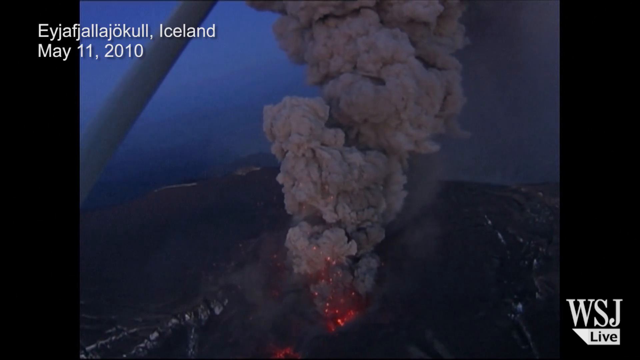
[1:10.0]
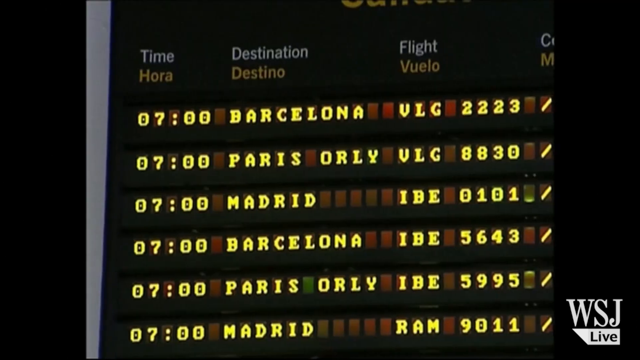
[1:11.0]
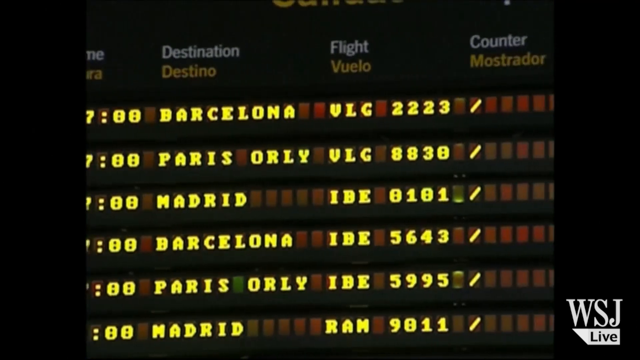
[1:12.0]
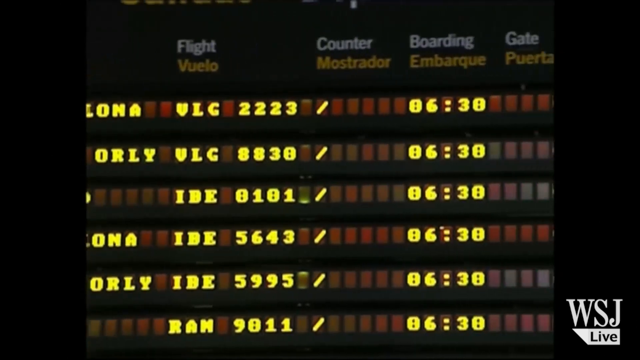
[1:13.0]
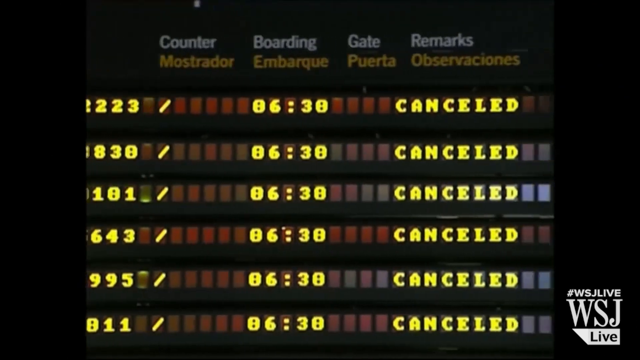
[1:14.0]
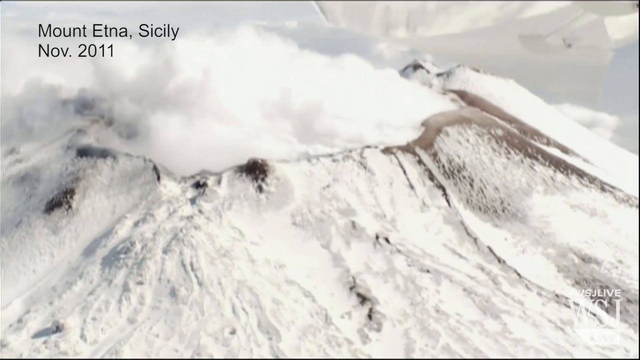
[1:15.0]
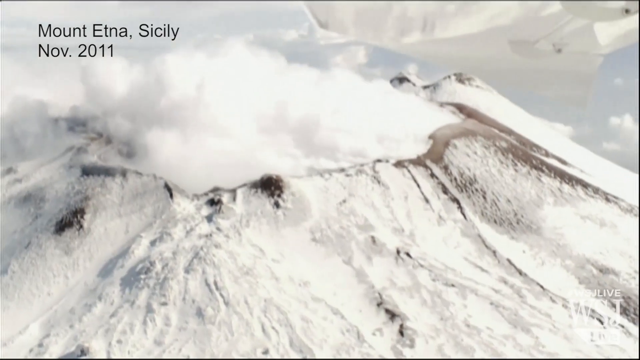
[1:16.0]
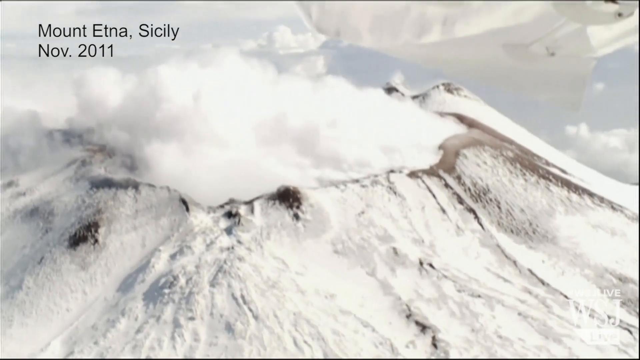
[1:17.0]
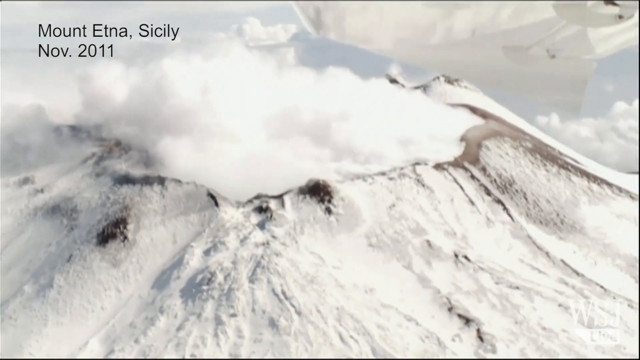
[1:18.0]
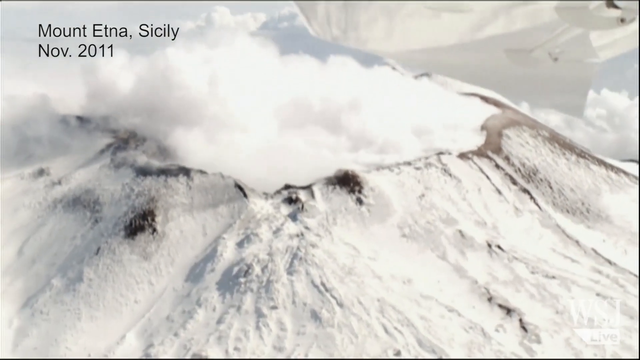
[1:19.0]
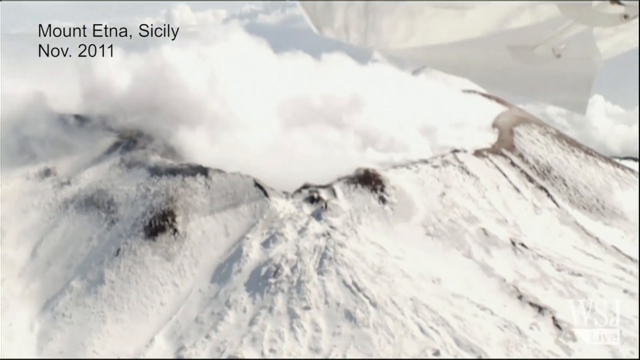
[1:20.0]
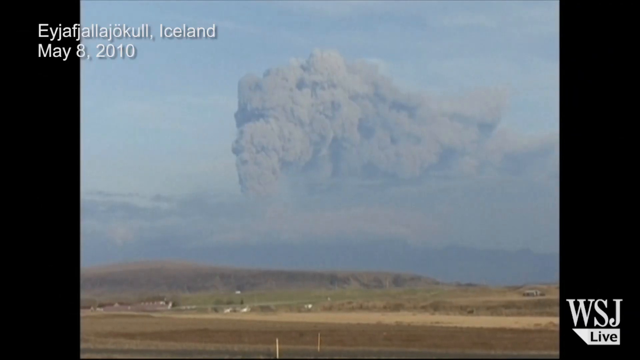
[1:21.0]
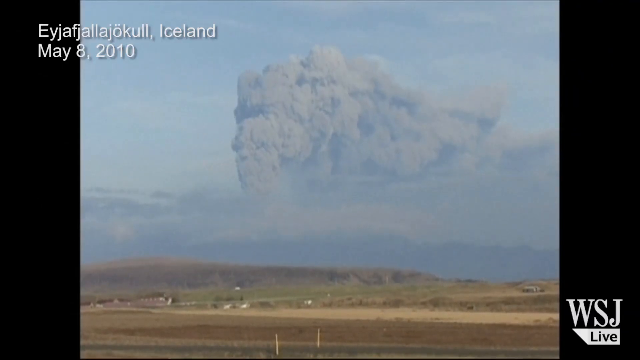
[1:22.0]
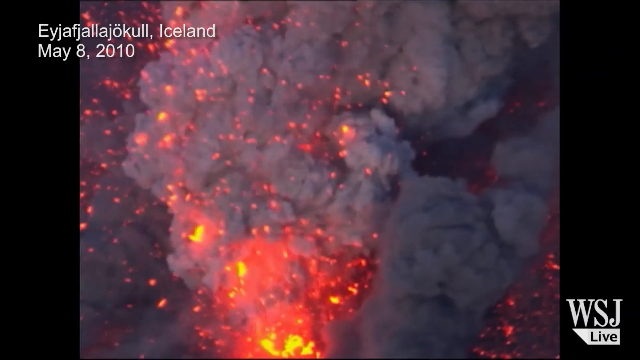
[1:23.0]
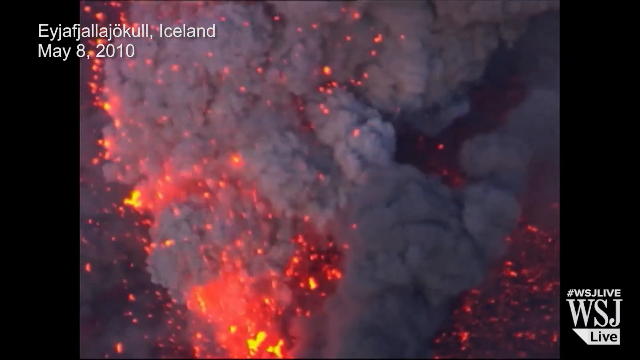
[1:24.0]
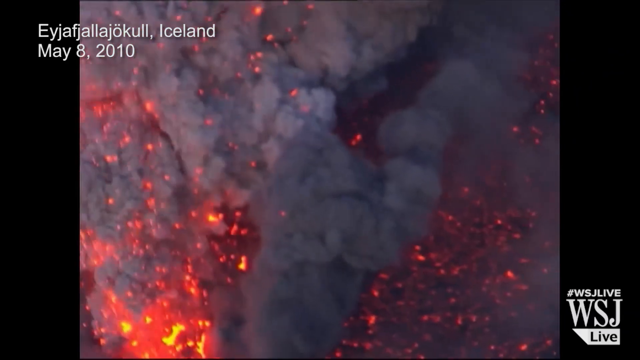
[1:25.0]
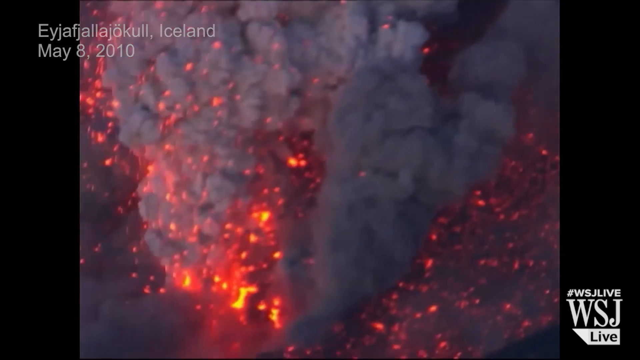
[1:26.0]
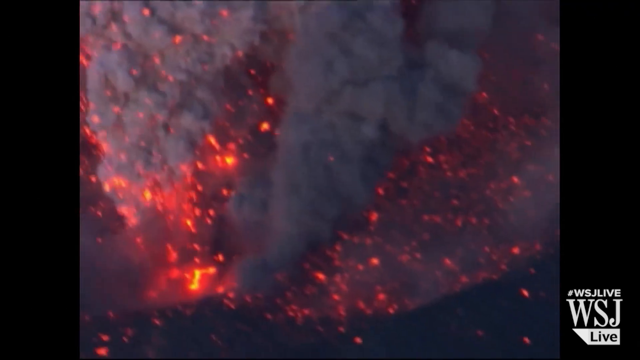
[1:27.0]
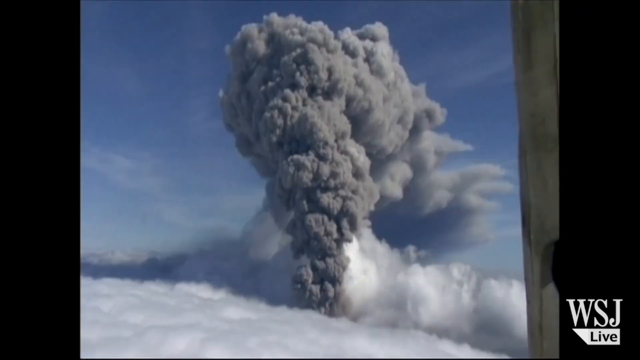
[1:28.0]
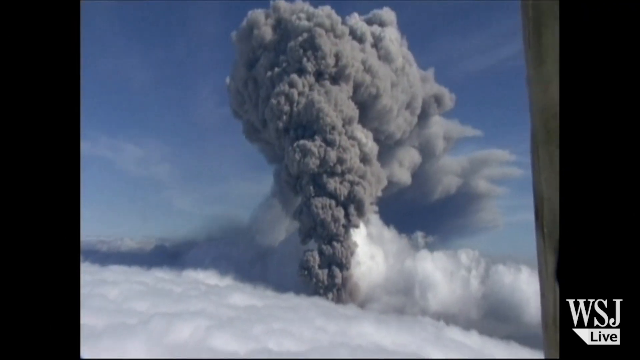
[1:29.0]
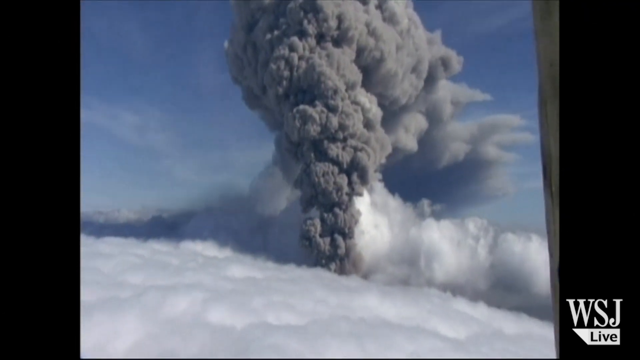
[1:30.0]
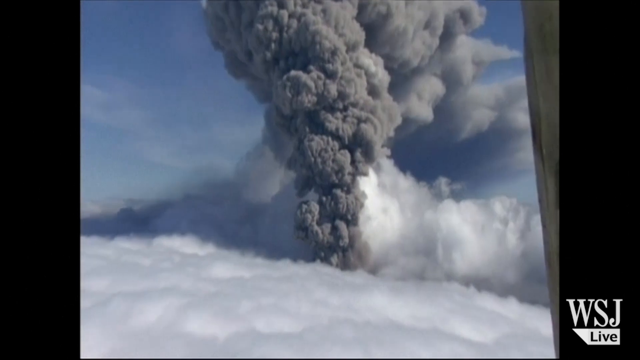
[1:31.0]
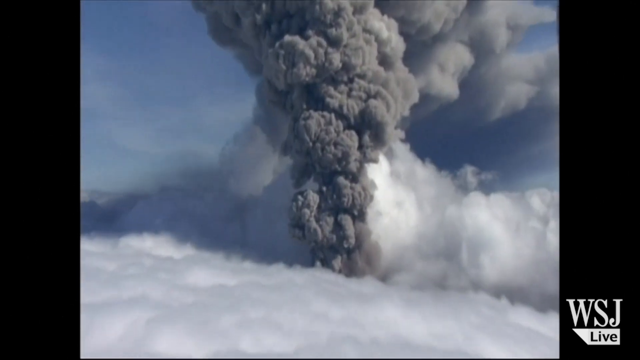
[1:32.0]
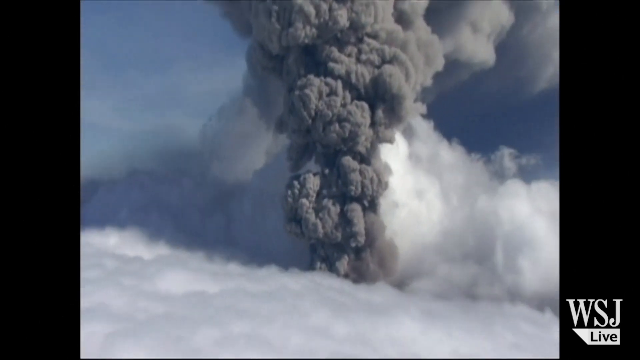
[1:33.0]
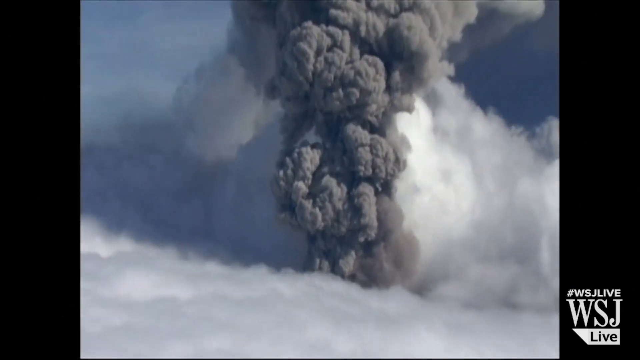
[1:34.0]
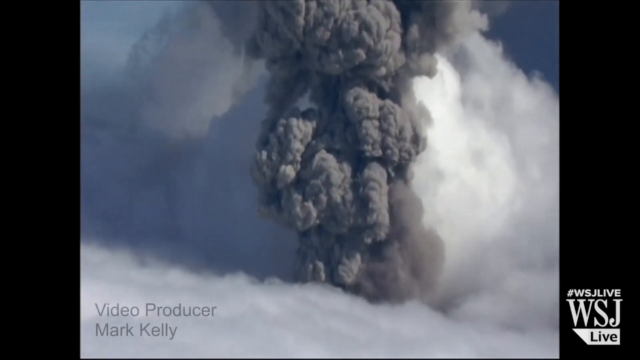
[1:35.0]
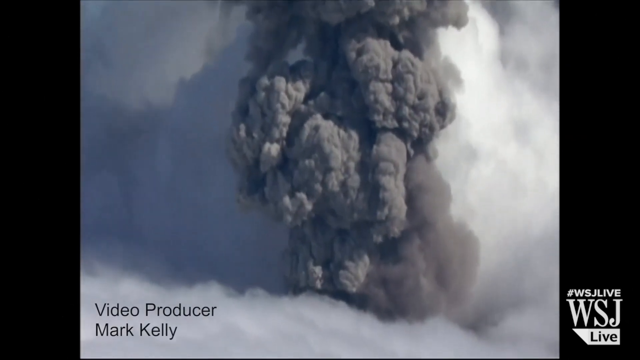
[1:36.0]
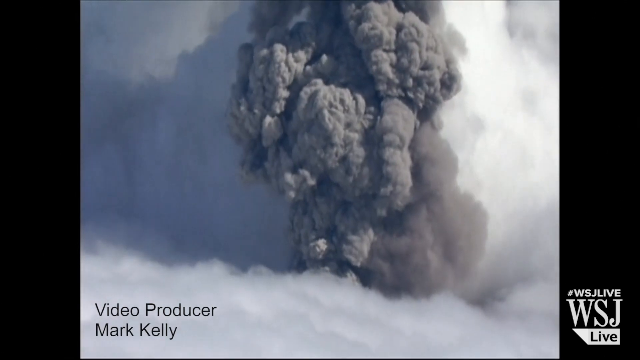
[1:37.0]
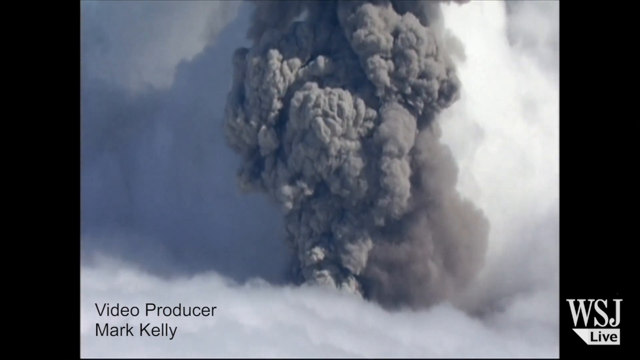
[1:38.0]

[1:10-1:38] The helicopter aerial view continues, showing a mountain exploding like a volcano. Lava and fire come from the bottom middle, and above it thick gray smoke clouds rise vertically. At the top left is some blue sky, though it is a bit foggy, and the mountain around the smoke is a very dark black. Text at the top left indicates Iceland and the date May 11, 2010, with the specific location name spelled "EYJAFJALLAJOKULL." The scene changes to what appears to be the inside of an airport, focusing on an infographic of destinations and arrivals, with many canceled names on the right at the top. The scene changes again, and the text at the top left now reads "Mount ETNA, Sicily," with November 2011 stated below. This mountain is very snowy and white, with a little browning on the right-hand side, and a huge sort of gap in the middle from which thick white smoke comes out very slowly. The camera pans slowly to the left. A series of quick shots then shows many different explosions and volcanoes with various kinds of smoke, and the camera more or less zooms in on a large gray plume of smoke surrounded by white clouds and white smoke.